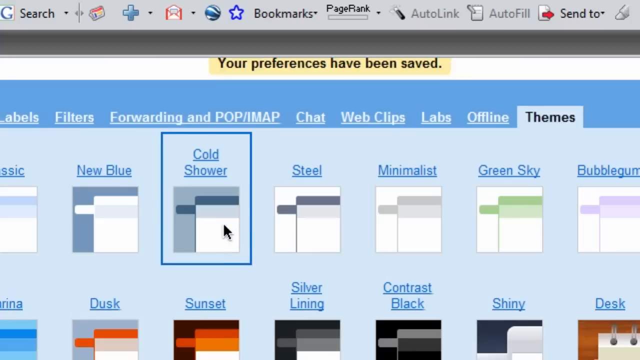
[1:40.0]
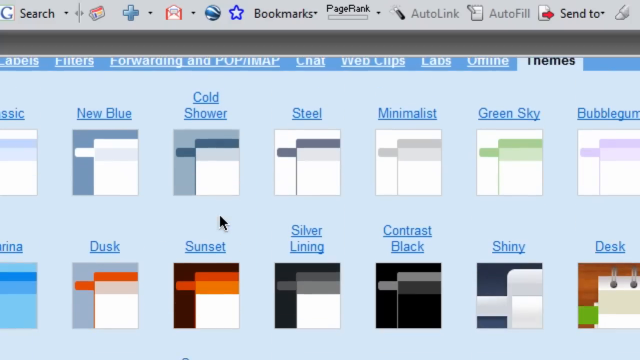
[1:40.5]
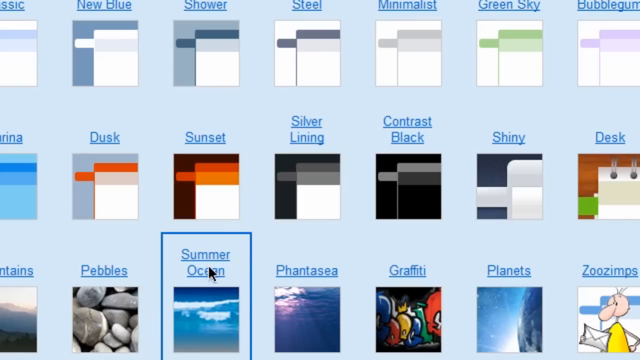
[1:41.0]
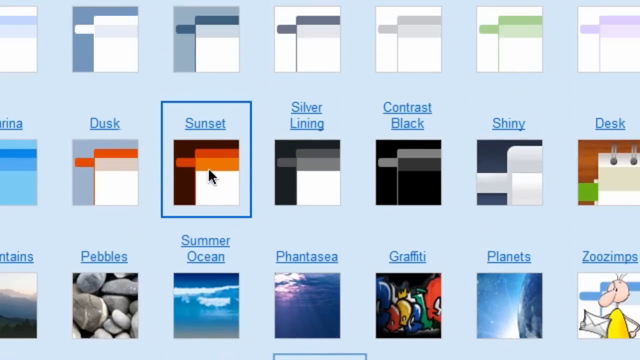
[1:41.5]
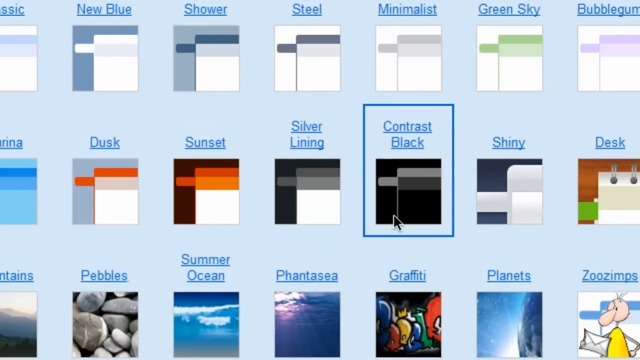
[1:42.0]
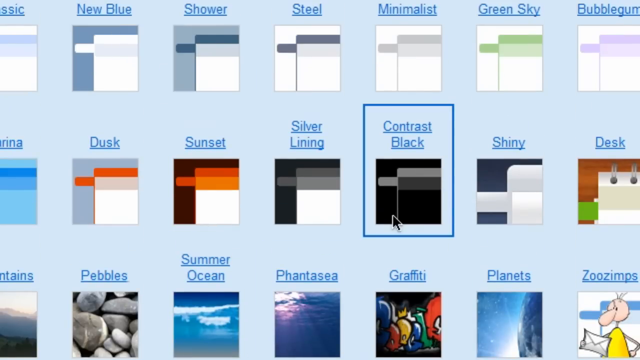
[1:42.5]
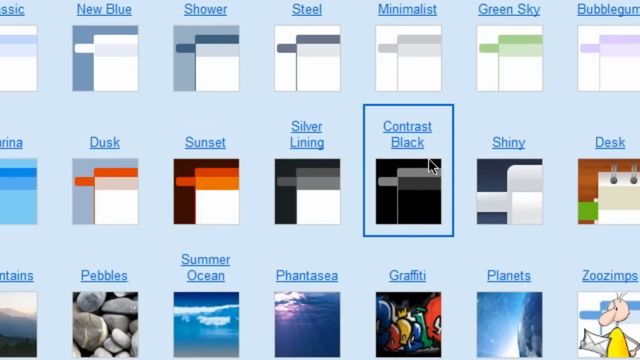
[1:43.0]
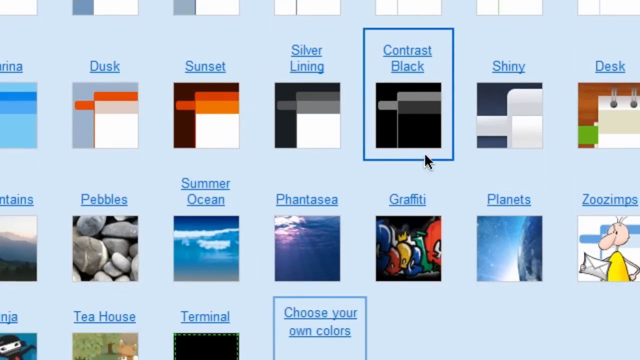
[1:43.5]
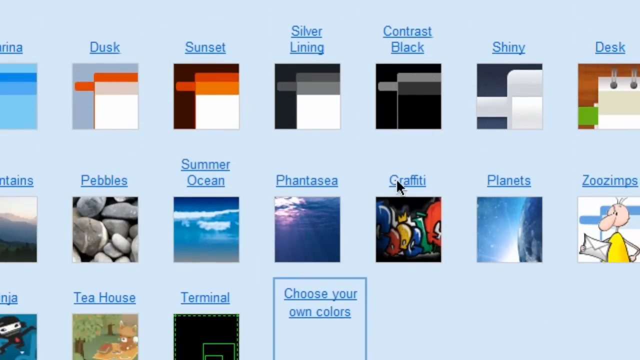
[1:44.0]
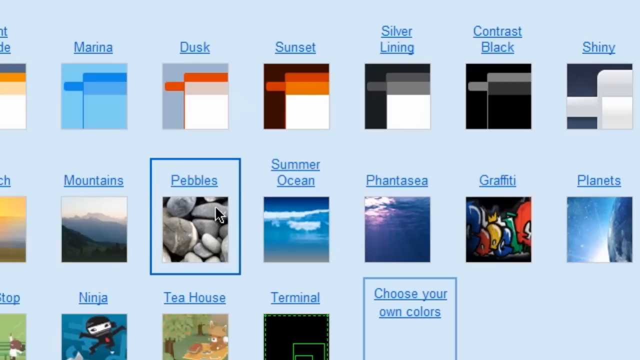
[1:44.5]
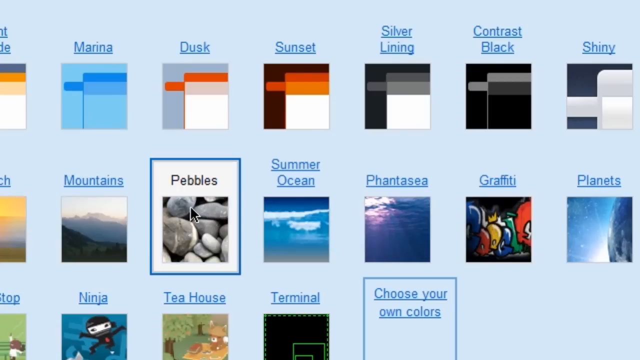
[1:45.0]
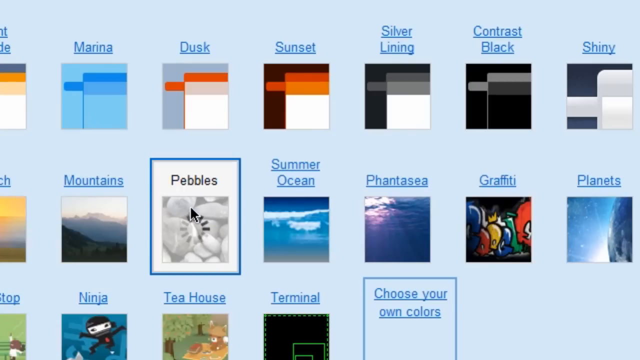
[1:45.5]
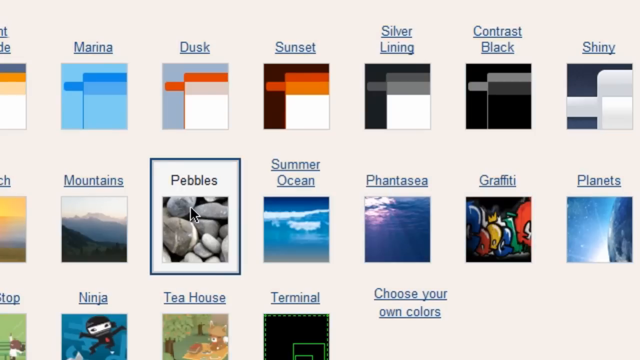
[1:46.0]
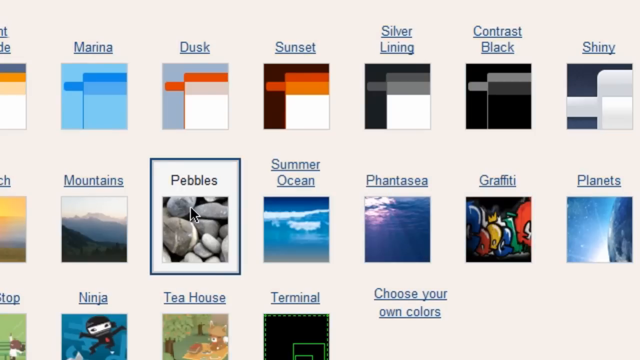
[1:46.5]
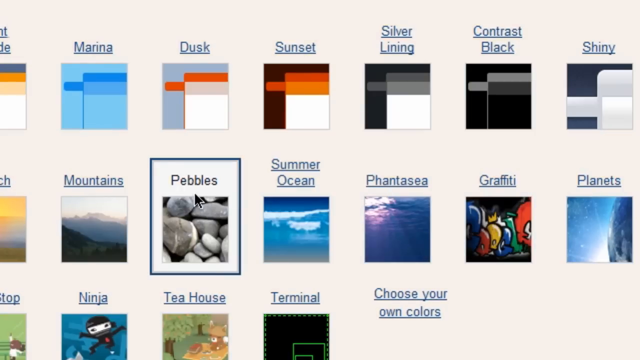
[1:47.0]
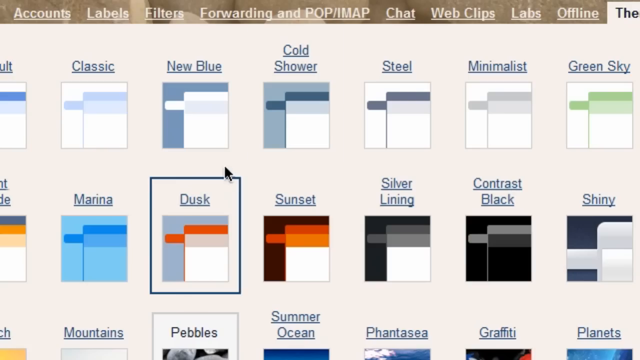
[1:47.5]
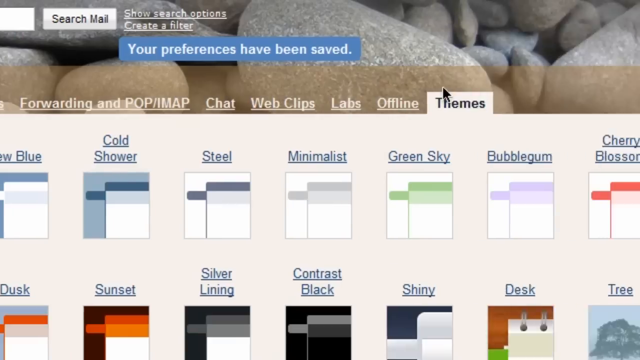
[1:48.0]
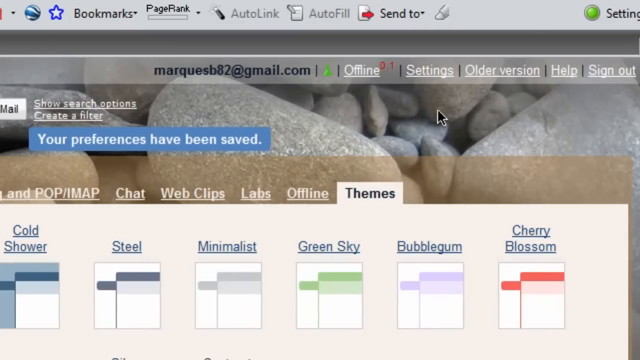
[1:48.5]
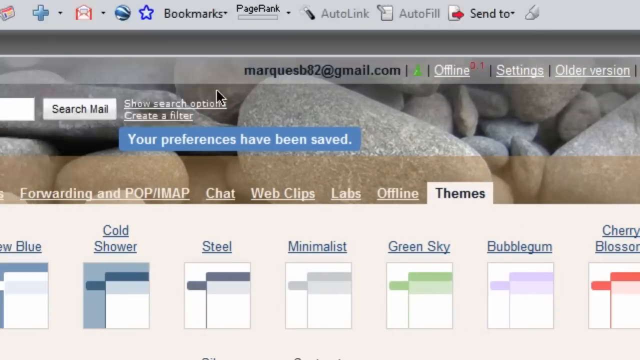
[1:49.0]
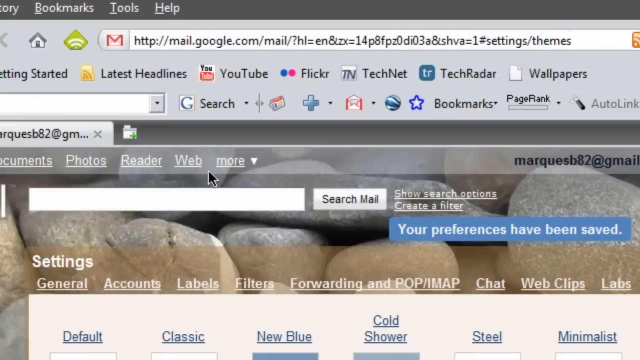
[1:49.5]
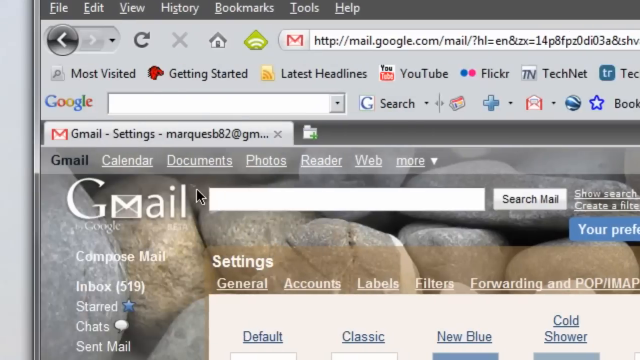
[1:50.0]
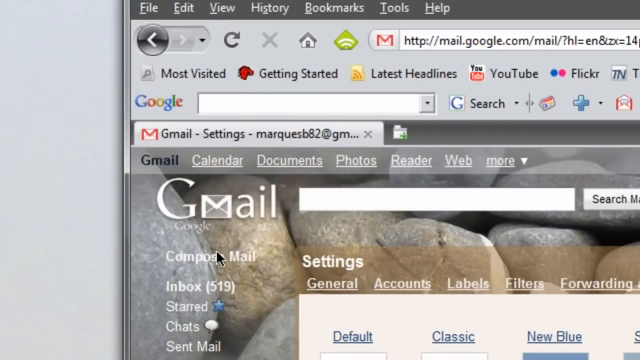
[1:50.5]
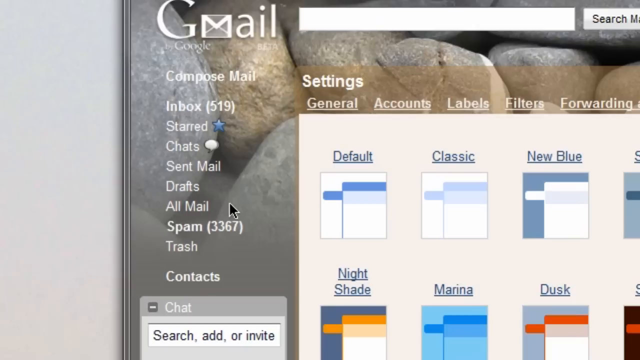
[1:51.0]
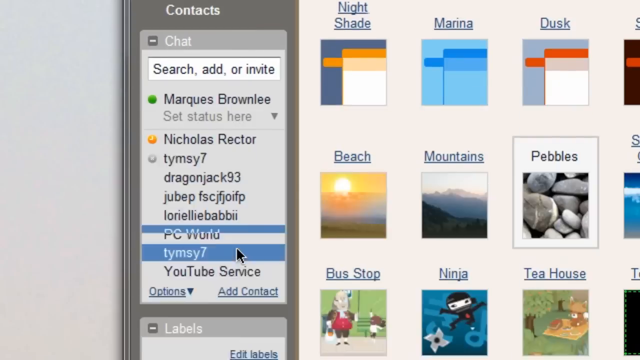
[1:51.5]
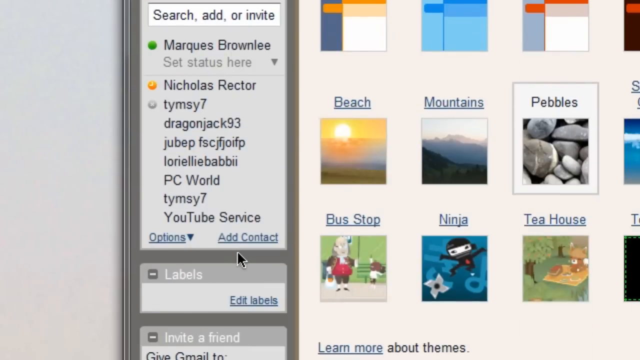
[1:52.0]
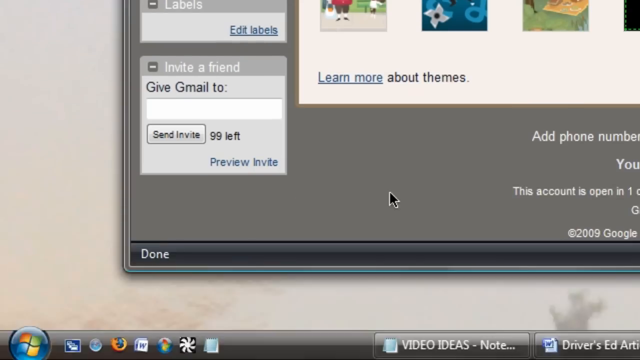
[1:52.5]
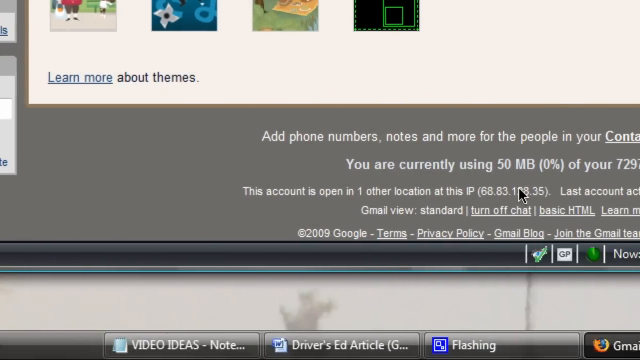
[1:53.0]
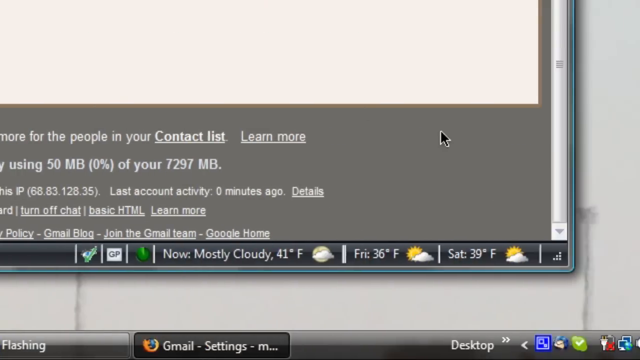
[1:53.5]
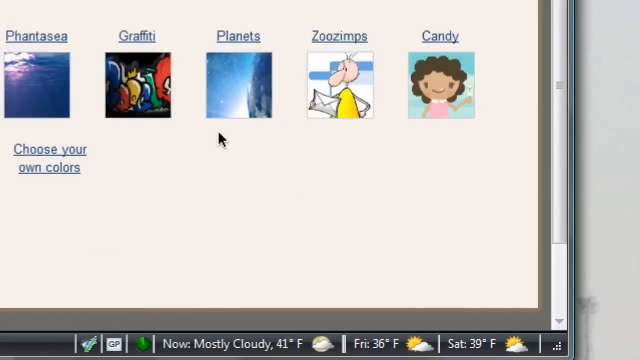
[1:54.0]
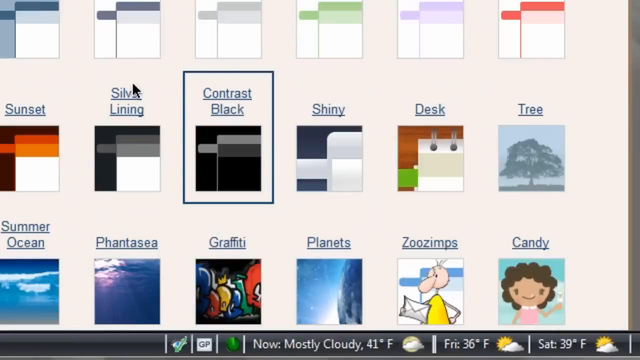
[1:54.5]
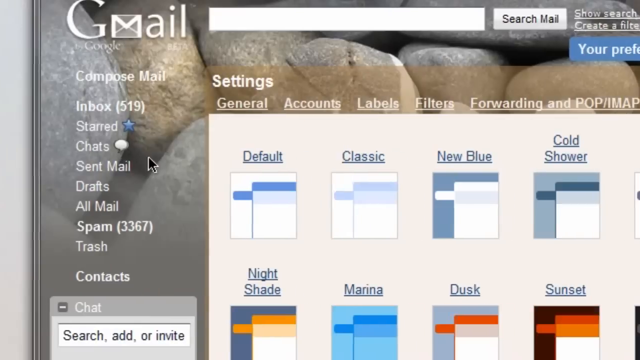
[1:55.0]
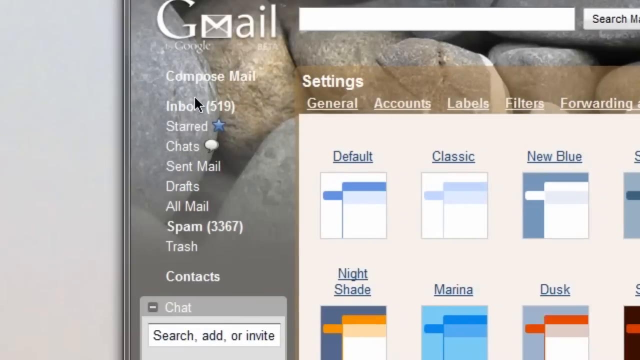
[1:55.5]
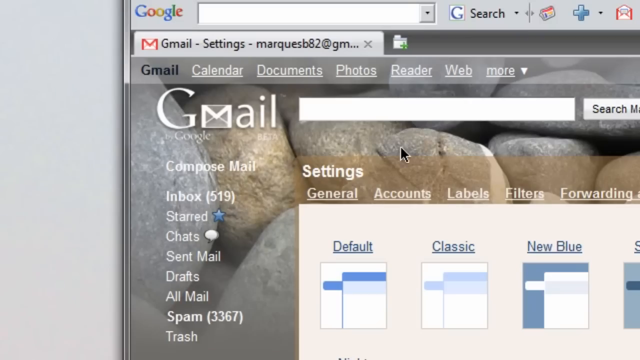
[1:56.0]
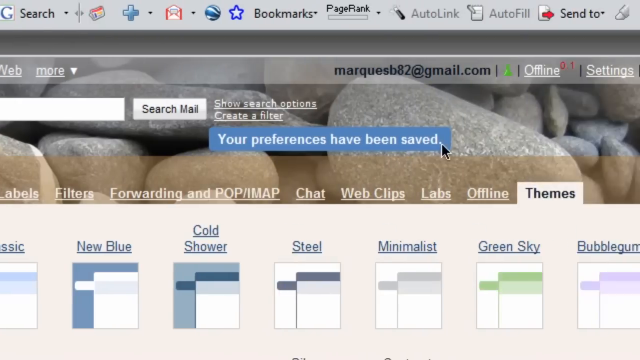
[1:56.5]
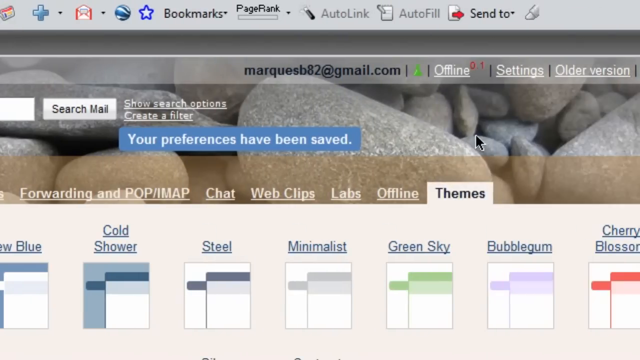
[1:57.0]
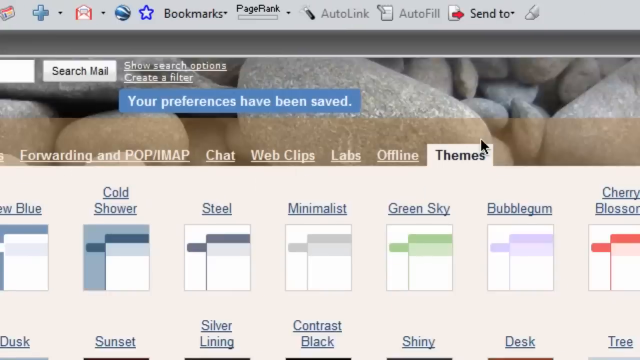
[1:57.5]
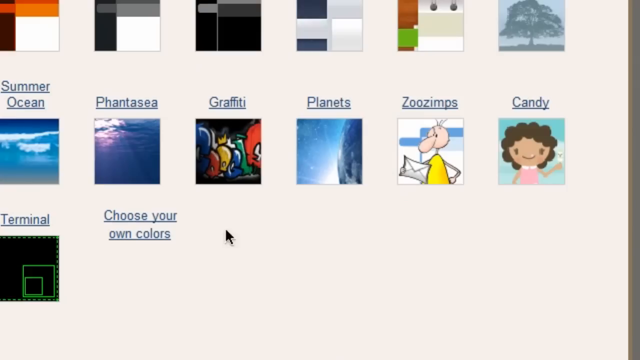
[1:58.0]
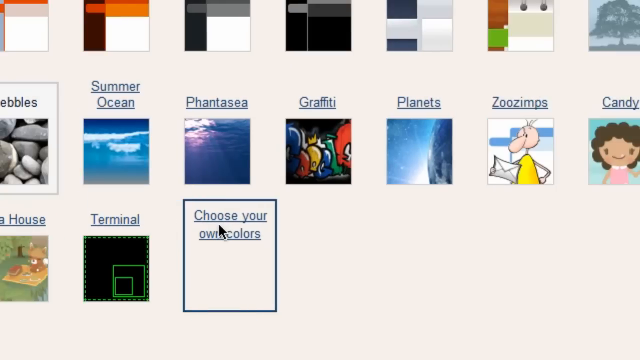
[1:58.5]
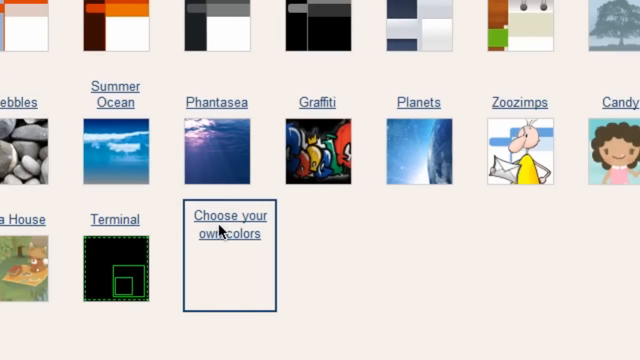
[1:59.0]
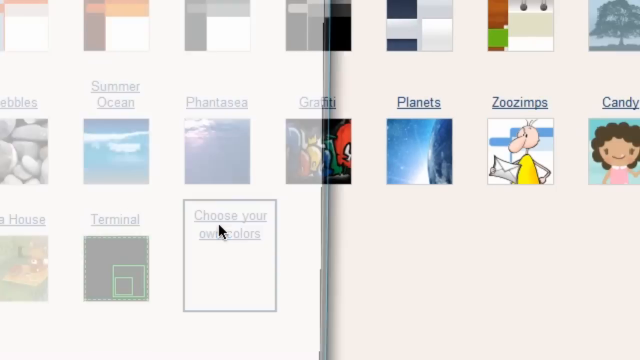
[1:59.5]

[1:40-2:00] The user looks through the theme options again, with the cursor moving around the screen very quickly. The cursor hovers over contrast black, then clicks on pebbles, which turns the background surrounding the theme options into an image of pebbles, apparently on a beach. The pebble image seems very high quality, with pebbles of all different sizes, all appearing very smooth and grey. After the pebbles option is chosen, a blue pop-up with white font says "your preferences have been saved". Right at the end, the user clicks on choose your own colors again.